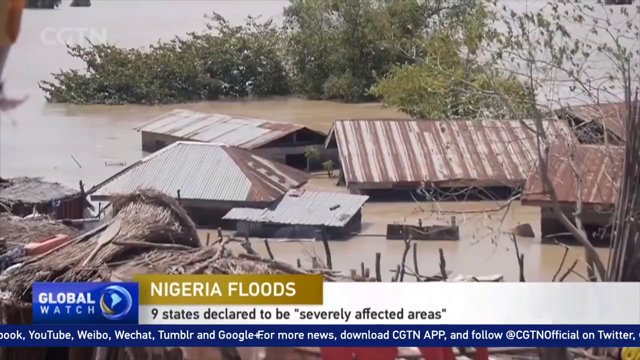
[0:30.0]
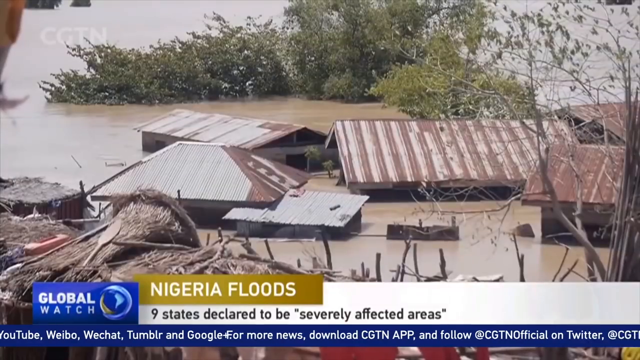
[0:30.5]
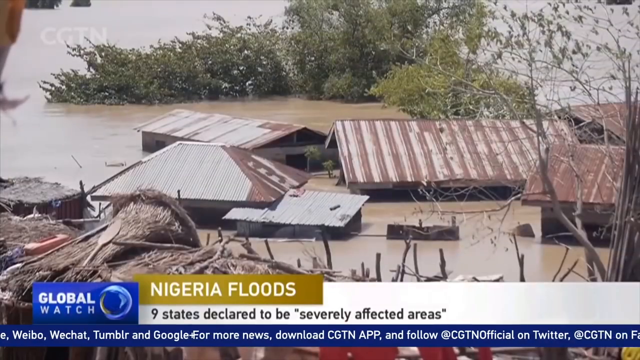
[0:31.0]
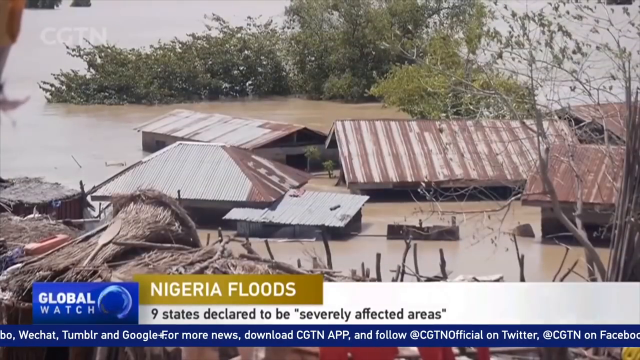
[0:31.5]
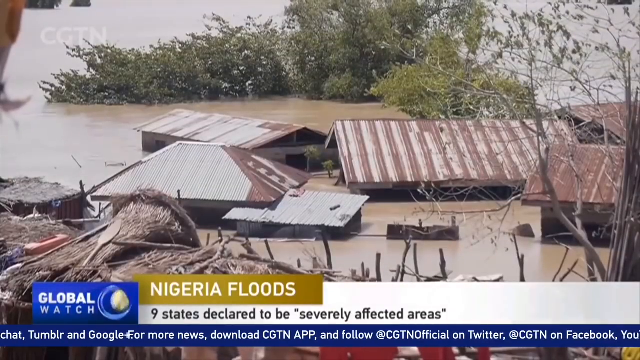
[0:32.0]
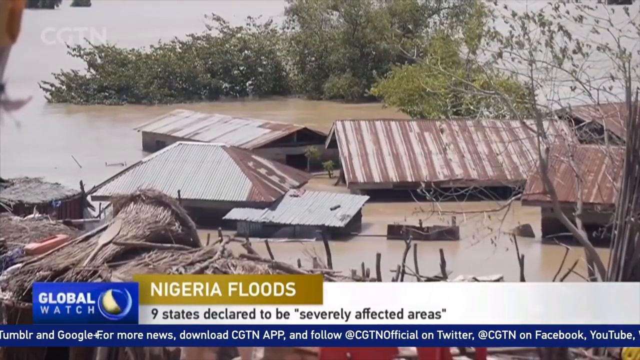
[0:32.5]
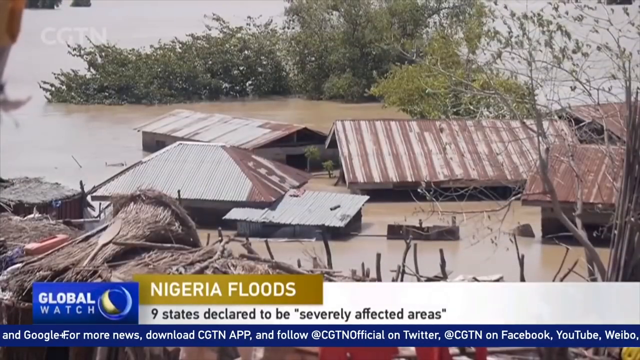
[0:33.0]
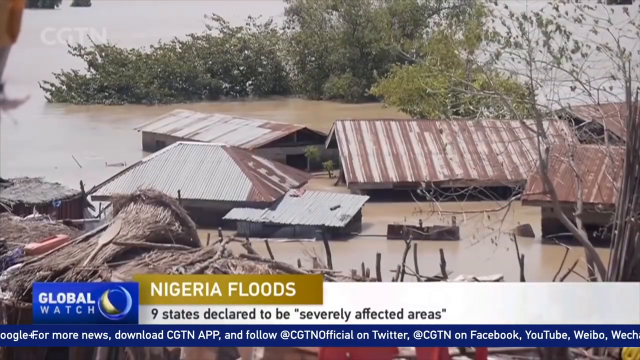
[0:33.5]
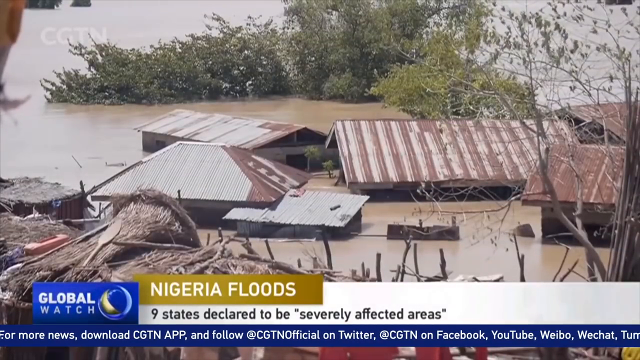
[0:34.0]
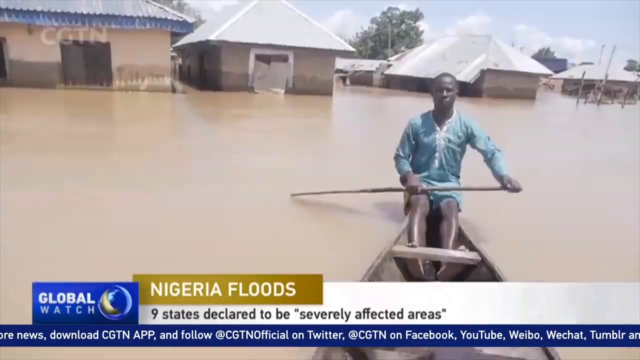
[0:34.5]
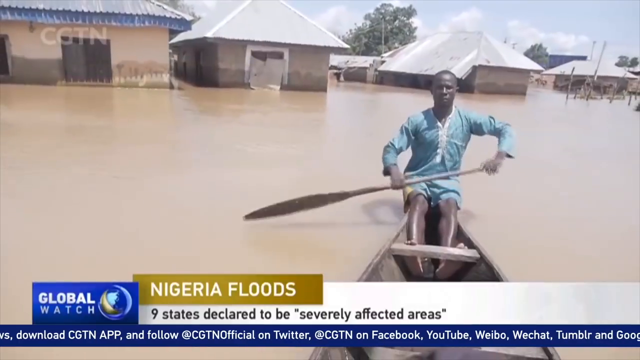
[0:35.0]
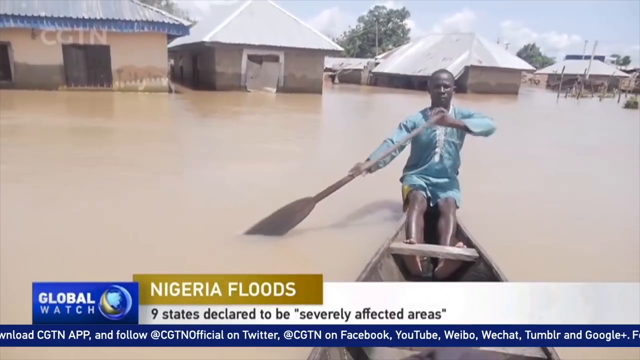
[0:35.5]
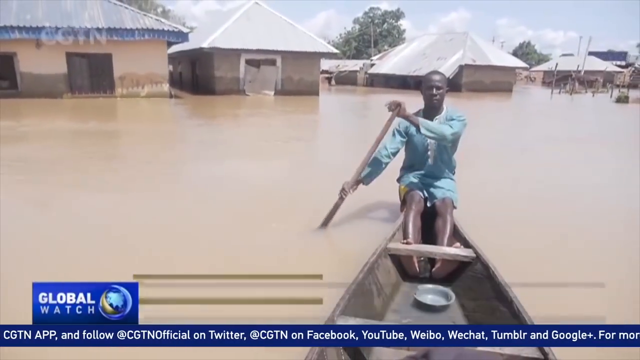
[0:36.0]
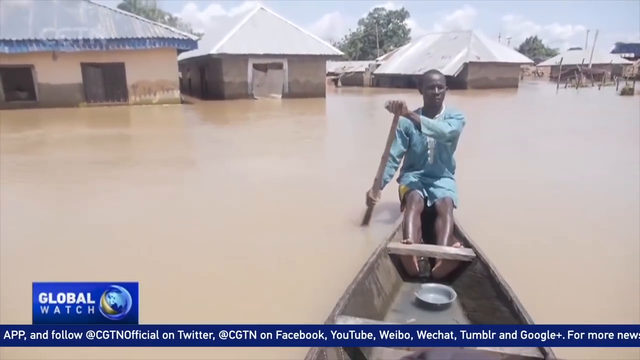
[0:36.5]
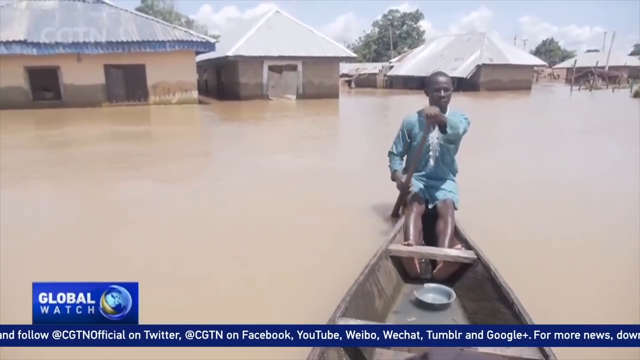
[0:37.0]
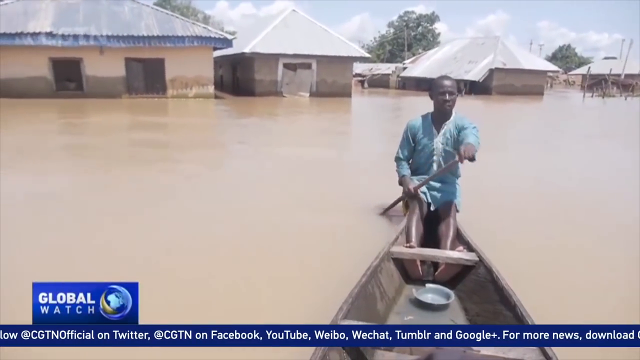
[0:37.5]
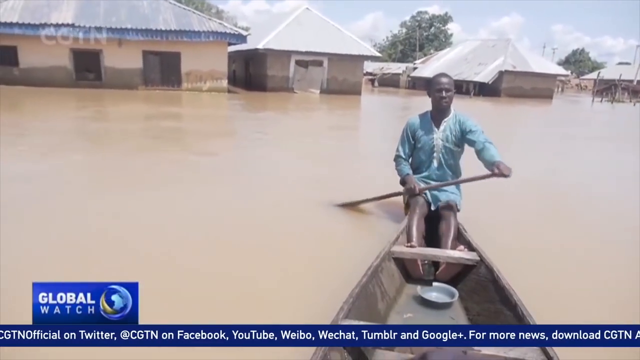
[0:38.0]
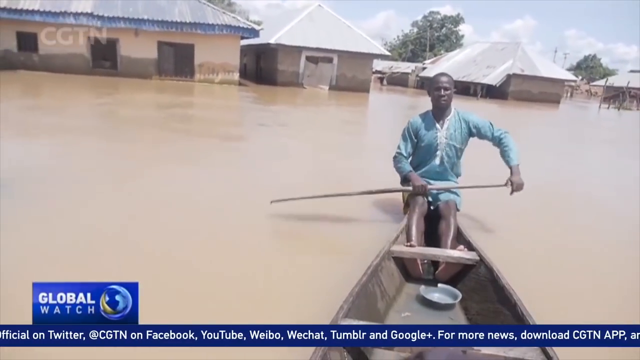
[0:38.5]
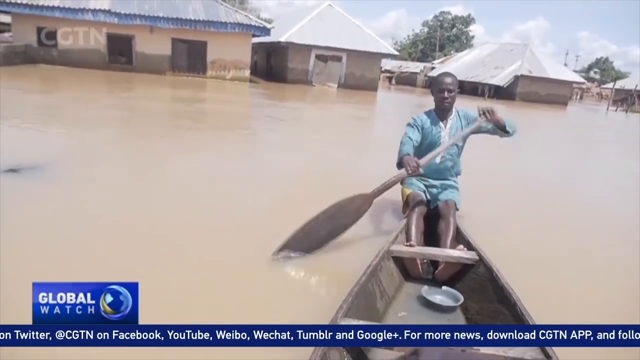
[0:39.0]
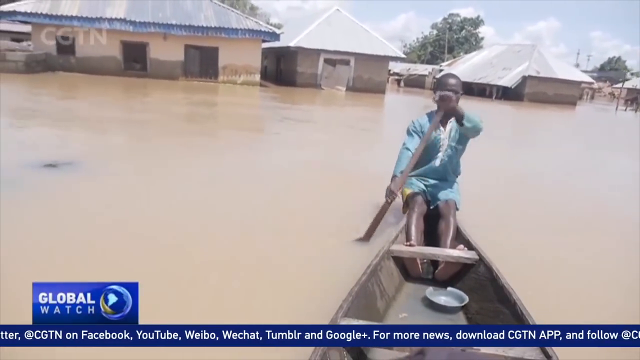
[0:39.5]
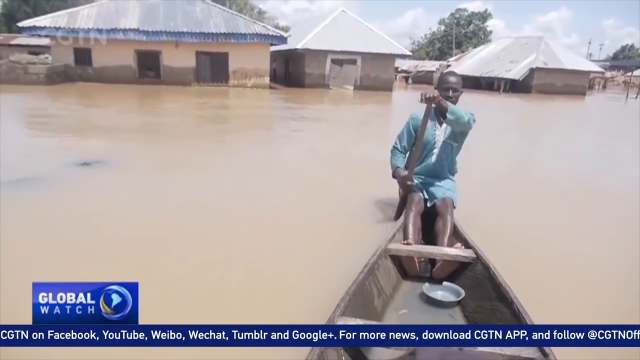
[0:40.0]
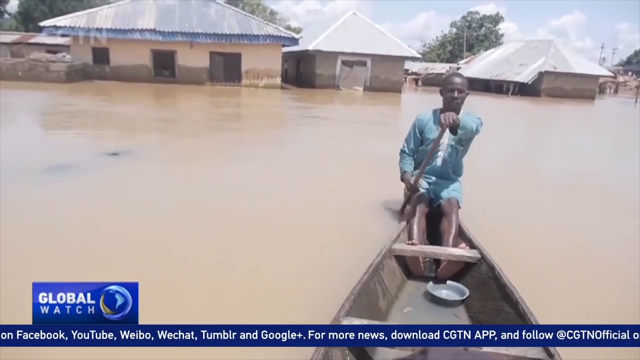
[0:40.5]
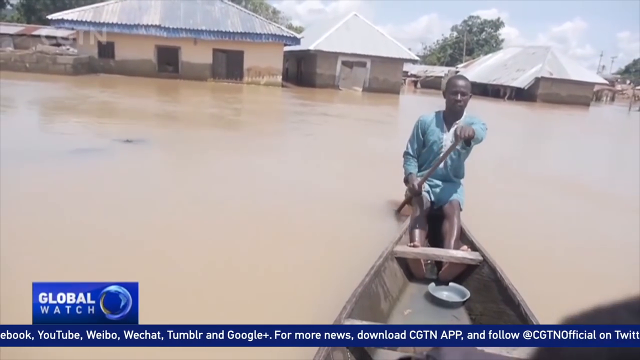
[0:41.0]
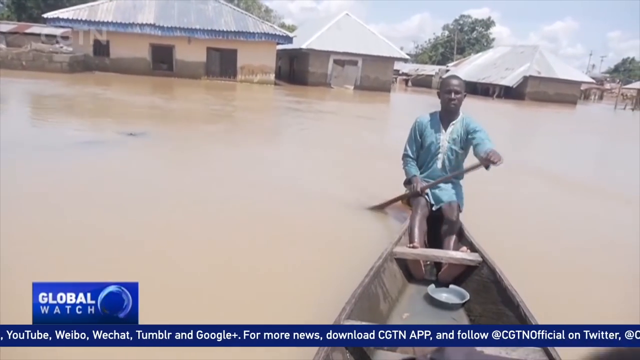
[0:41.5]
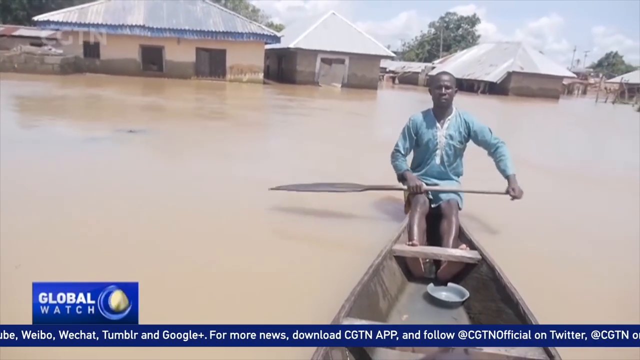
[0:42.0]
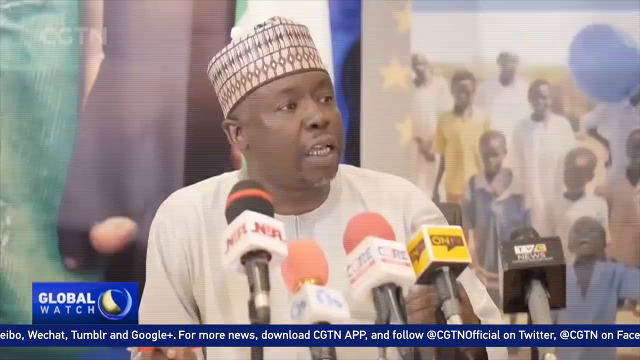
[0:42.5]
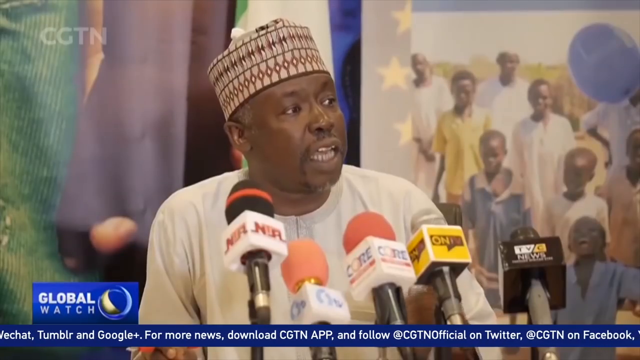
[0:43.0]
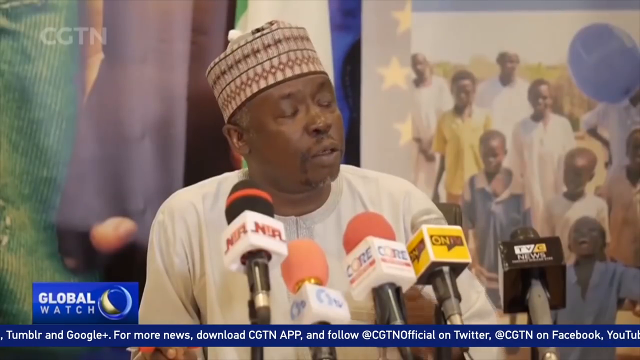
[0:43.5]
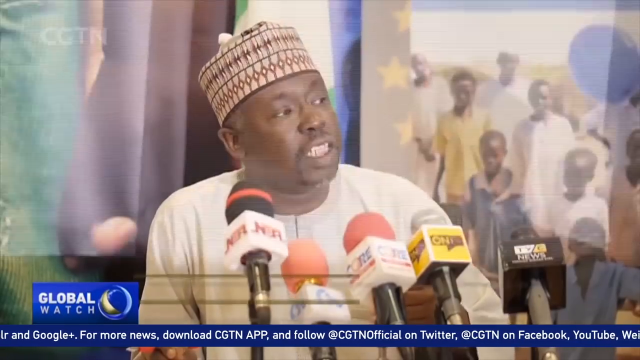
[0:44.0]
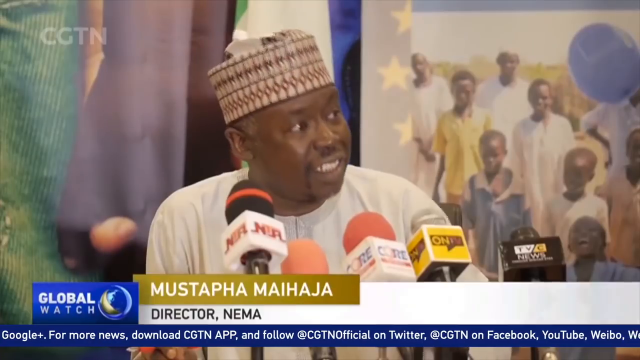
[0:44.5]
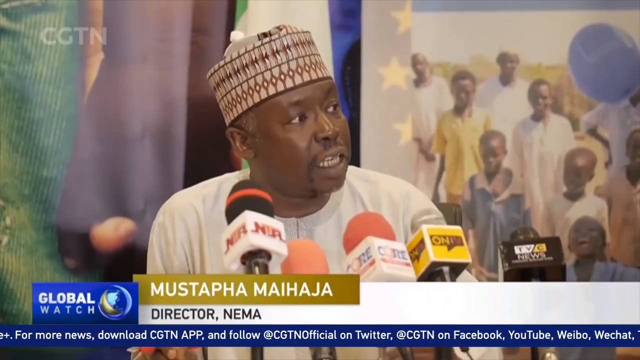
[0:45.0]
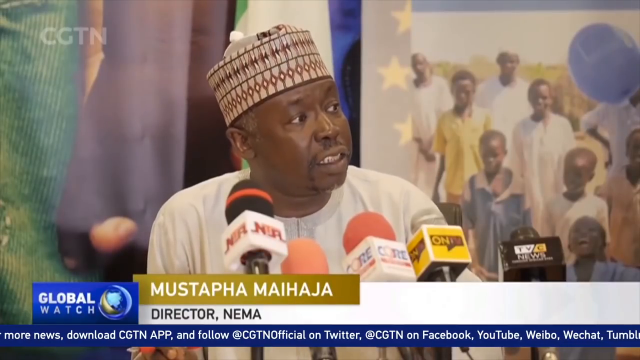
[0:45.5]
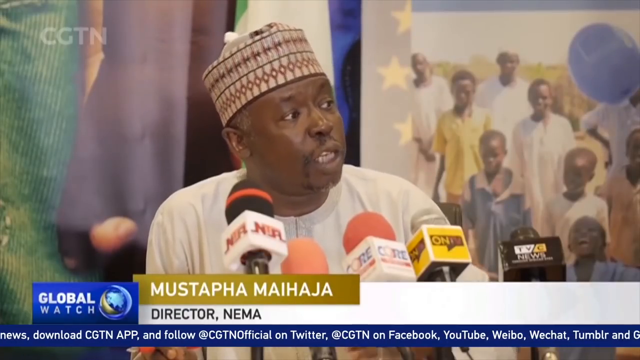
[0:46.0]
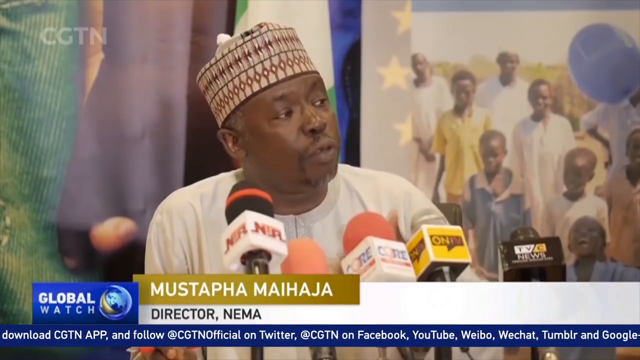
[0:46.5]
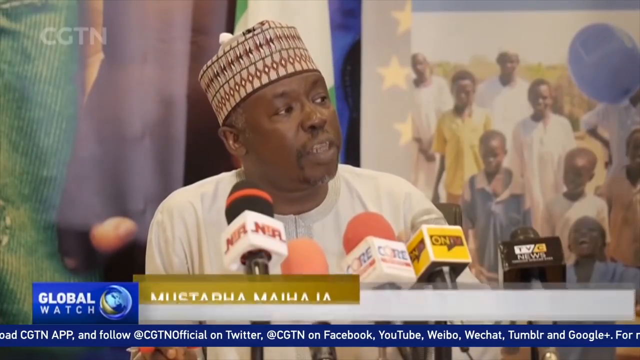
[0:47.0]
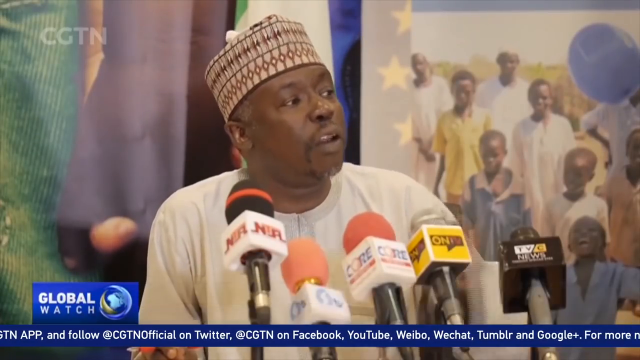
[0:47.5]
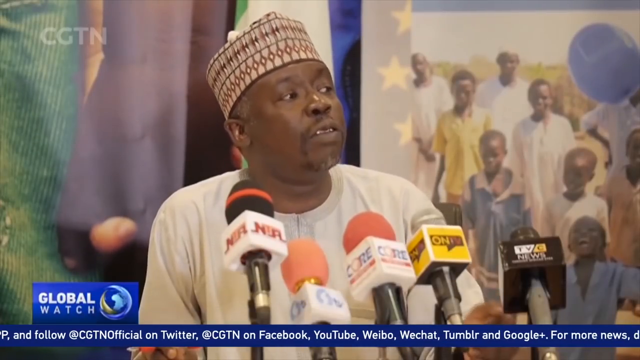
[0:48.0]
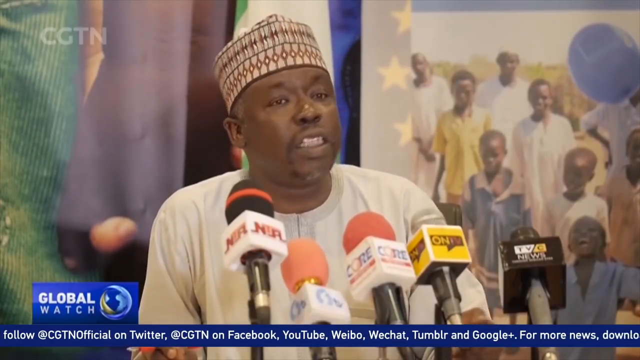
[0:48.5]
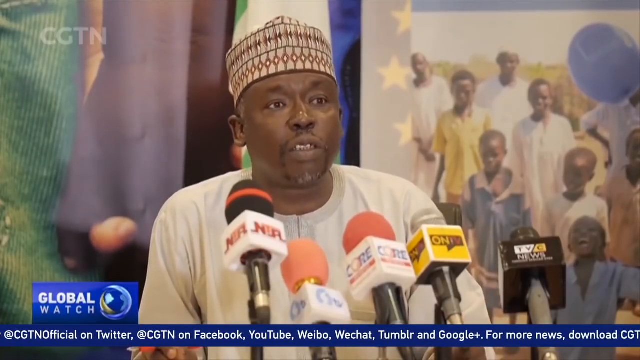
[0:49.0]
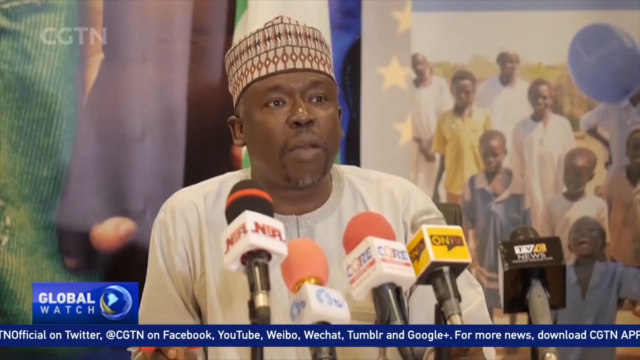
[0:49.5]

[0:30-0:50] A top view shows flooded houses with only their rooftops visible; their windows and walls cannot be seen. A side view then shows one of the severely affected towns, where the water is deep and people are using canoes to move around. A man wearing a blue cassock sits alone inside a canoe, maneuvering it across the water. Next comes a press conference where a man, Mustafa Ayi Hacha, the director of NIMA, is speaking about the floods. He has a disturbed look on his face.